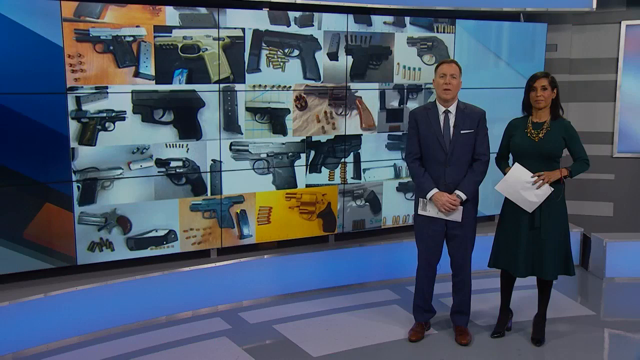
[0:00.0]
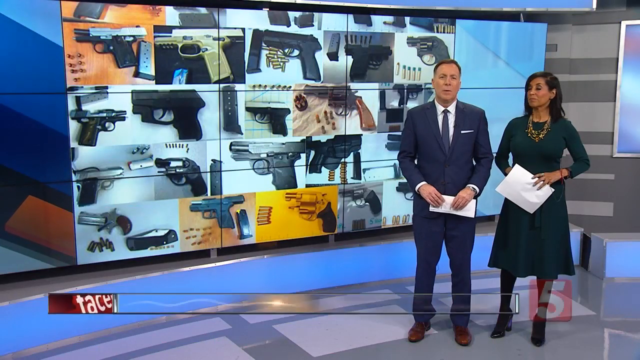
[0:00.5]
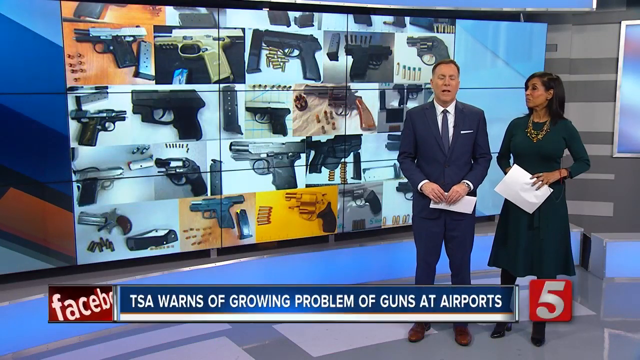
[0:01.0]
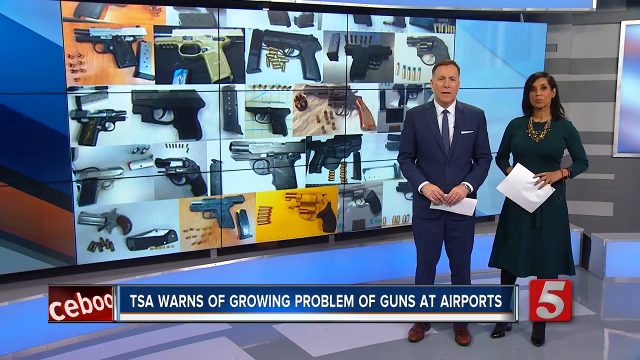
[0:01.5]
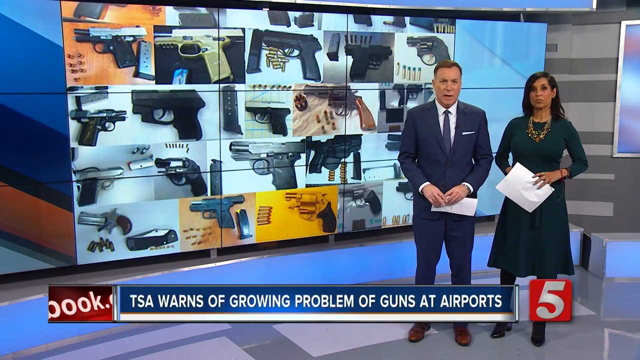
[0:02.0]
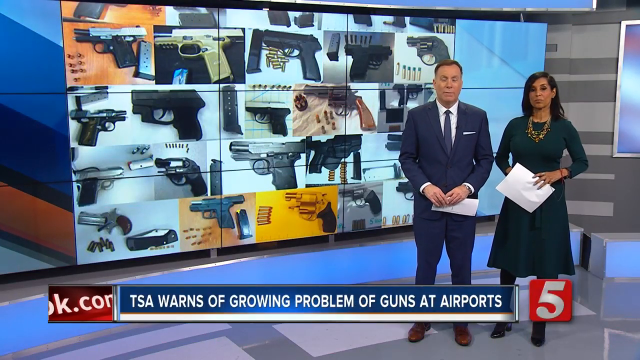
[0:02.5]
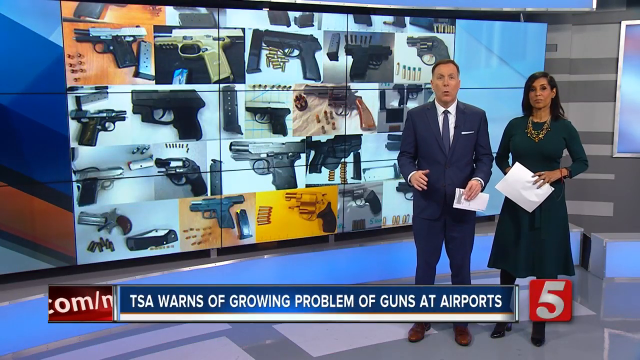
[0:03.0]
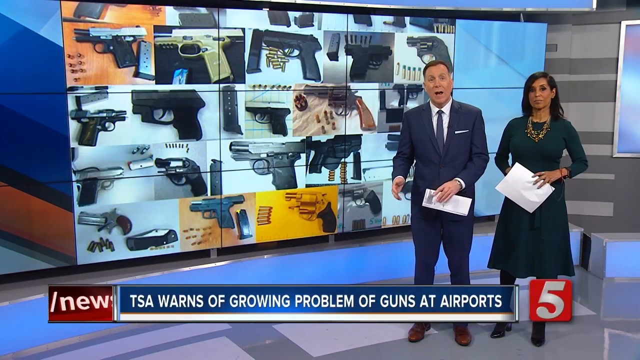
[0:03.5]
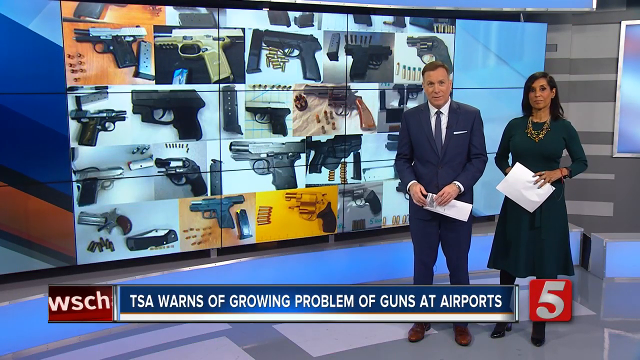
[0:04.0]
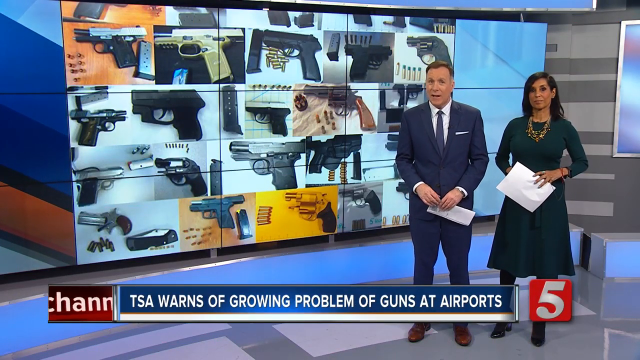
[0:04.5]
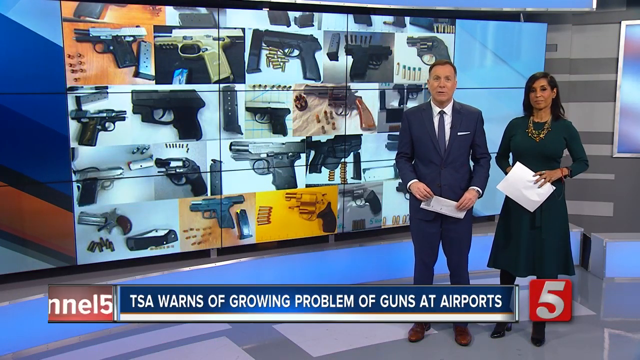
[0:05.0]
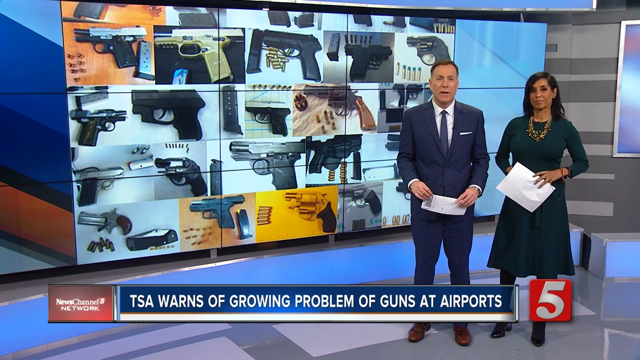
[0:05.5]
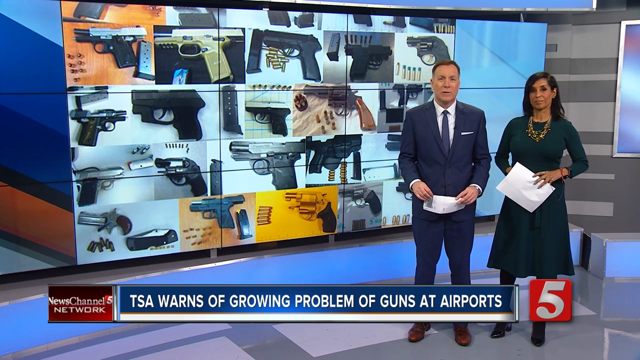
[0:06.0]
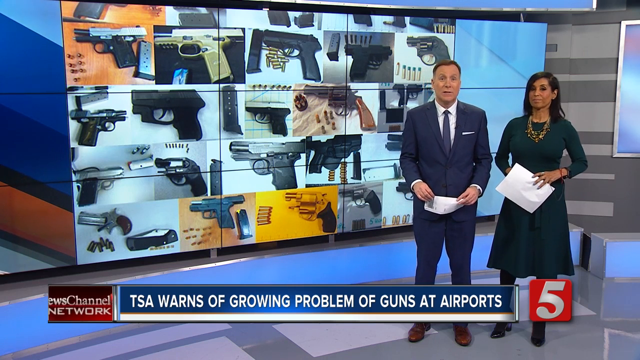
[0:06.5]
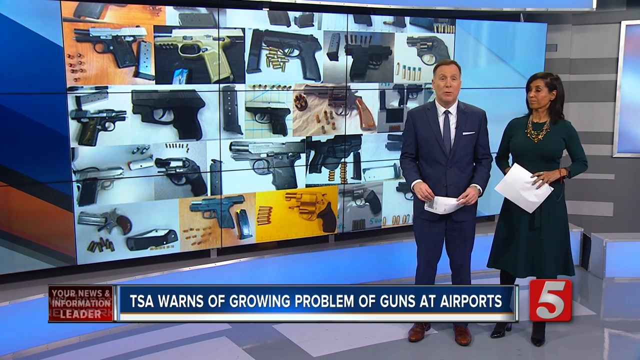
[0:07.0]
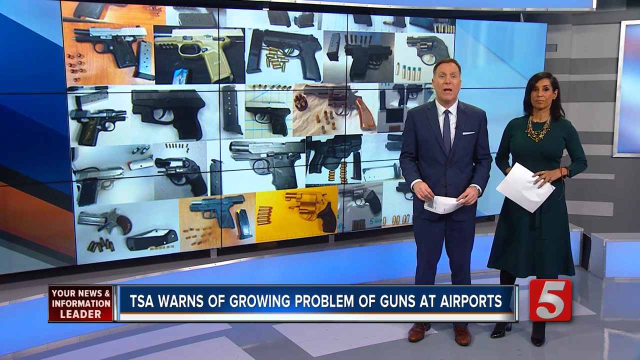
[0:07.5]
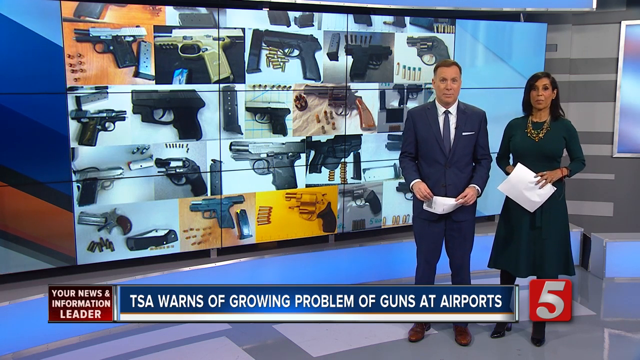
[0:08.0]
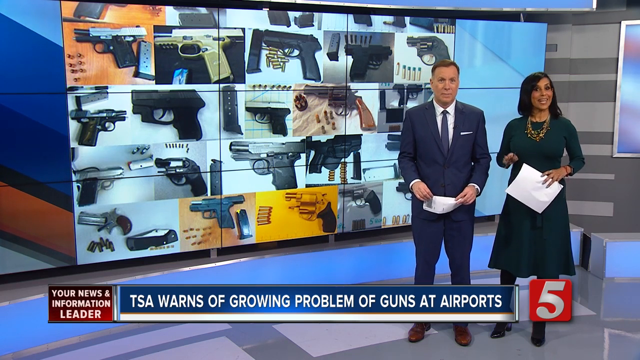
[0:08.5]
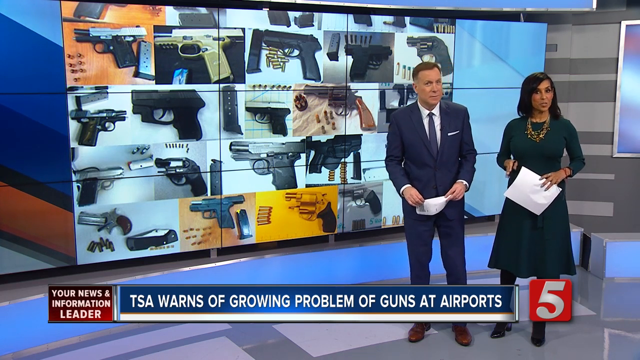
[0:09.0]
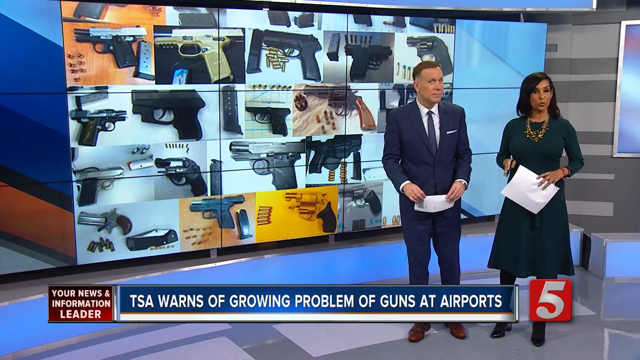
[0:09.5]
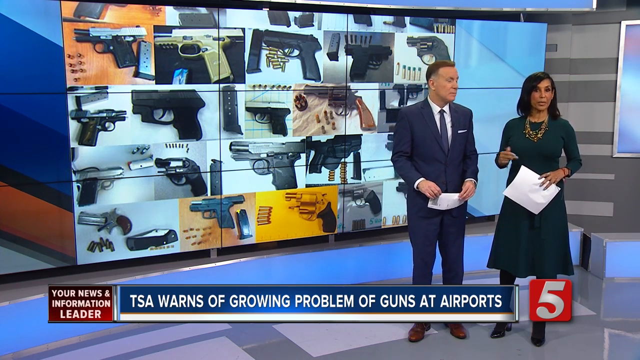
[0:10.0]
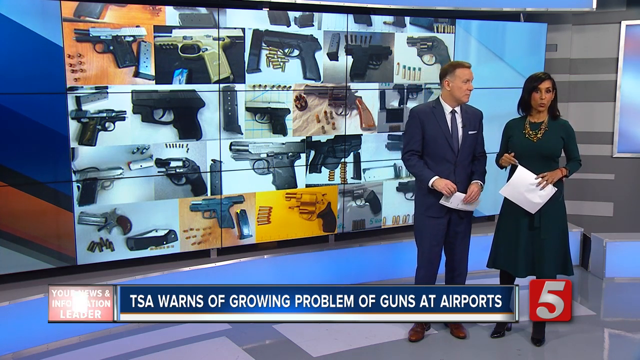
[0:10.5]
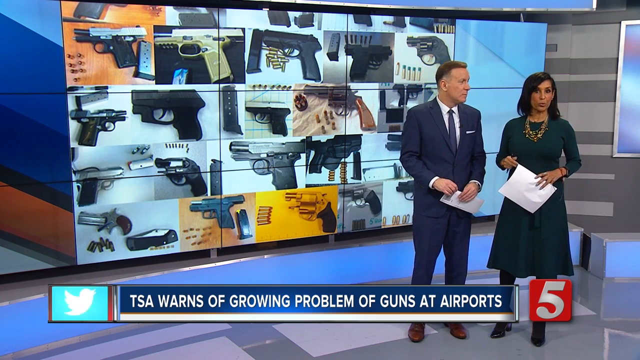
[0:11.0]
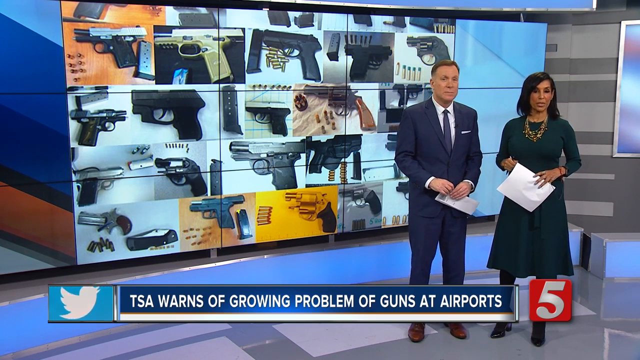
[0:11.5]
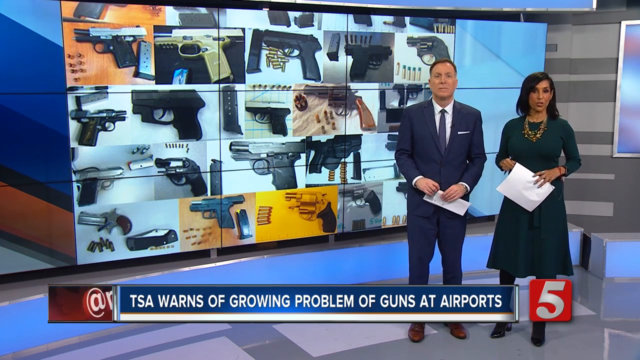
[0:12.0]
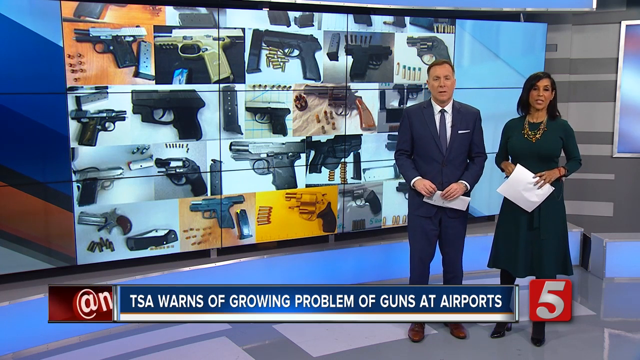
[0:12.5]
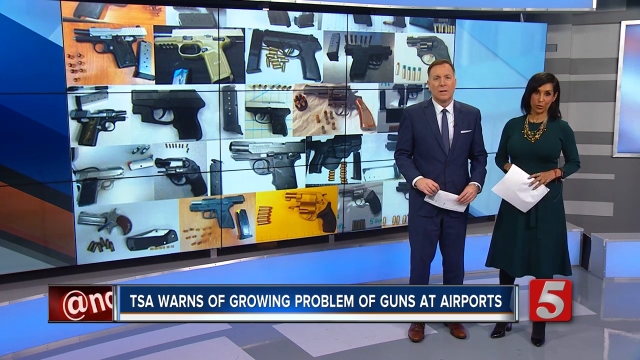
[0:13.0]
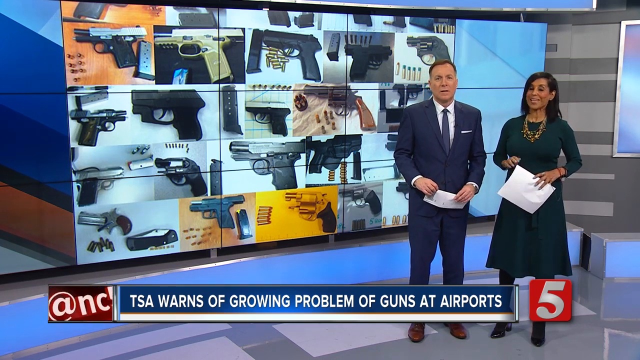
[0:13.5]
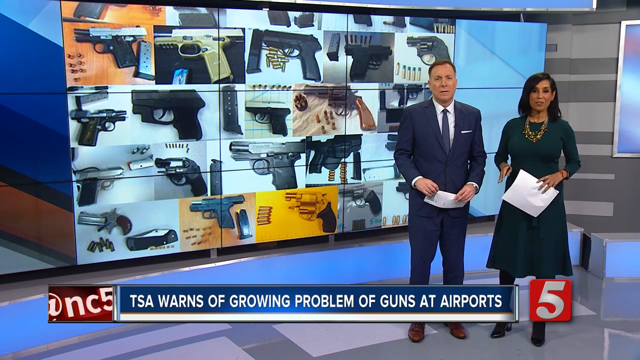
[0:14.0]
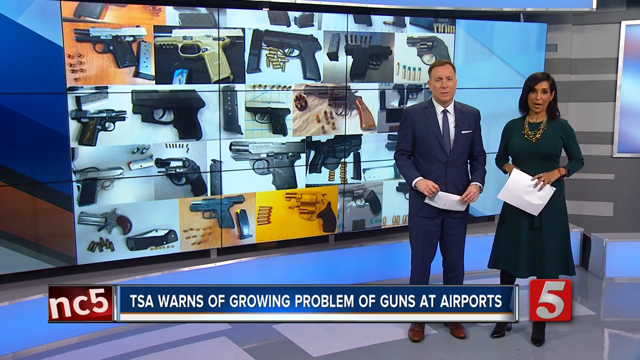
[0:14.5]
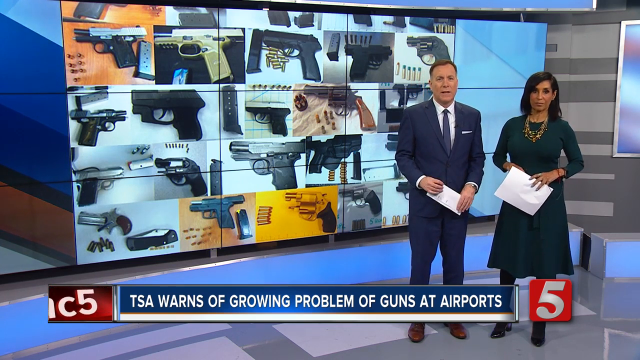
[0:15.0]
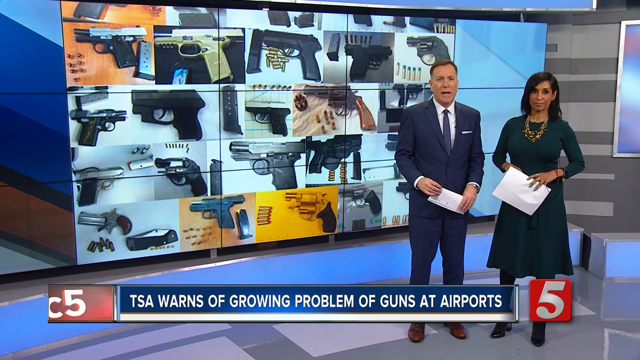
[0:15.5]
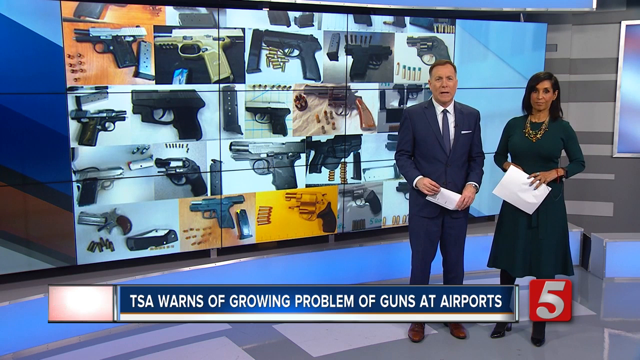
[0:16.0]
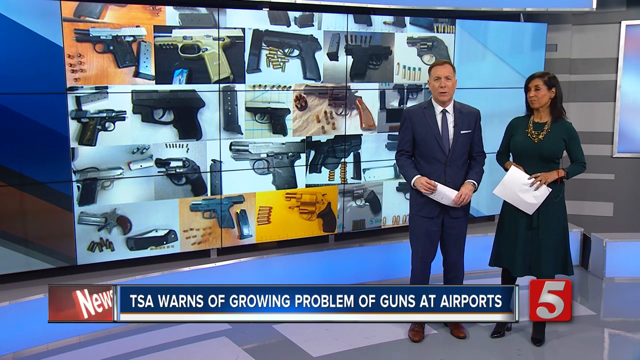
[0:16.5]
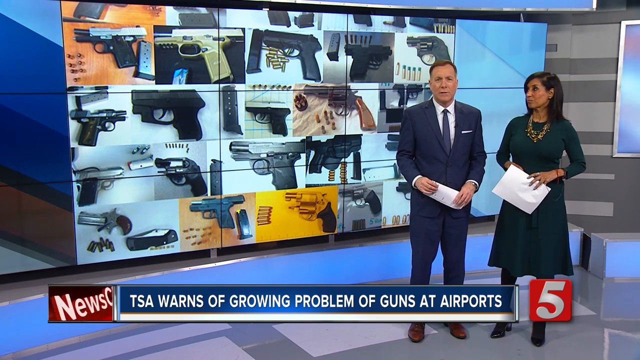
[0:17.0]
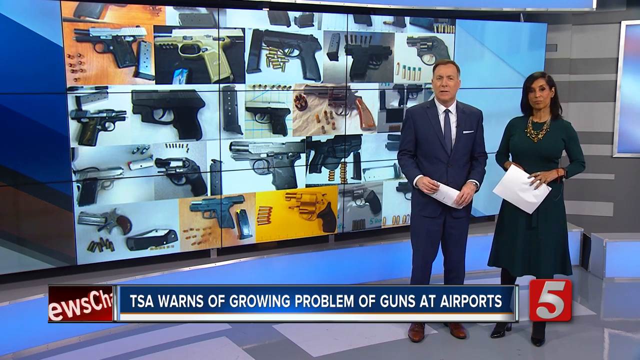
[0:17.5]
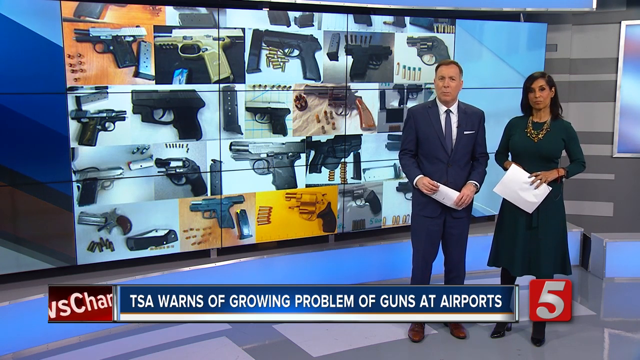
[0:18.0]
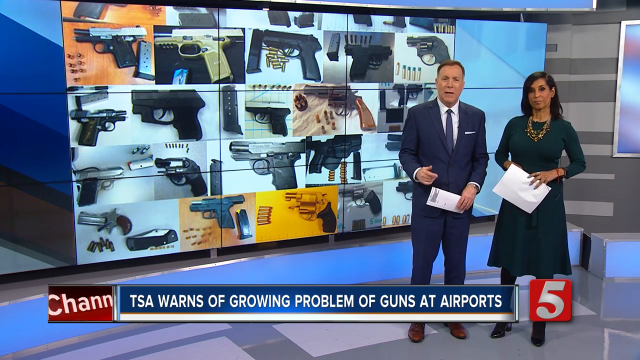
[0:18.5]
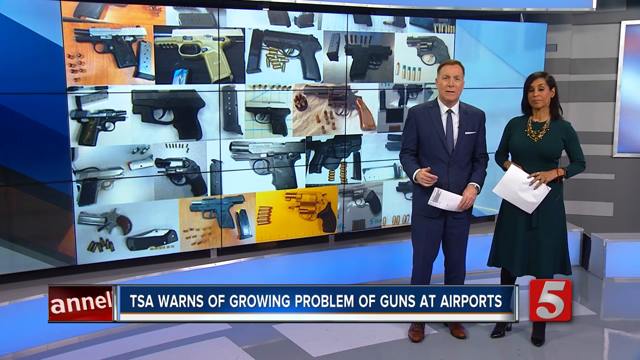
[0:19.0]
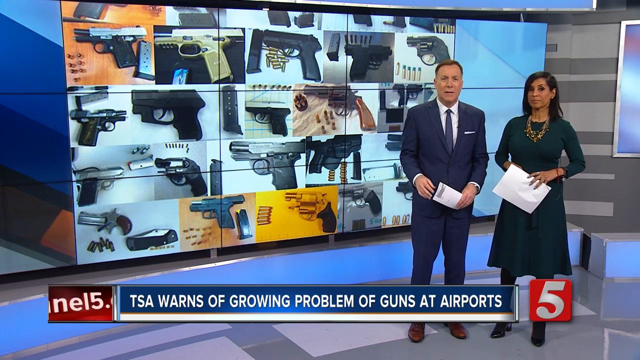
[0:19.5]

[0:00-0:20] A white man and a white woman, both dressed in all black, present the news formally in what looks like a news channel setting. Behind them, a screen shows guns and some bullets, and the story concerns the TSA warning of a growing problem of guns at airports. The presenters have white papers in front of them, possibly to help them remember what to say.